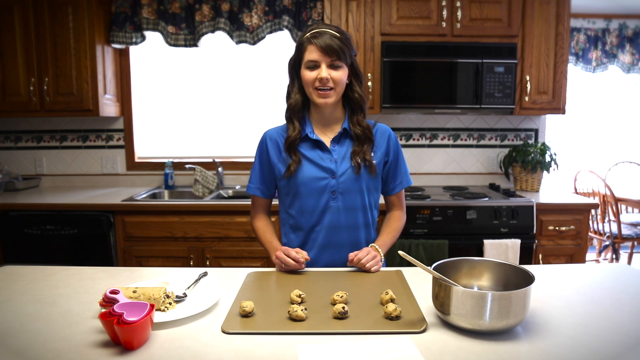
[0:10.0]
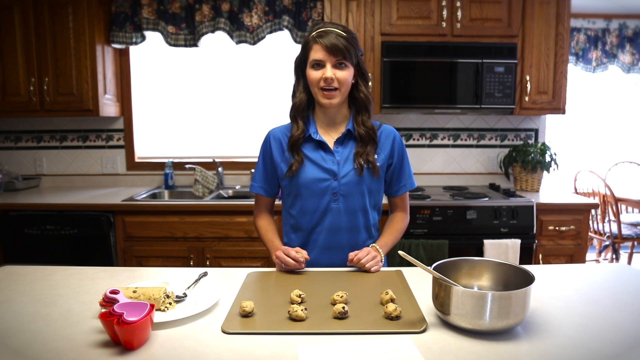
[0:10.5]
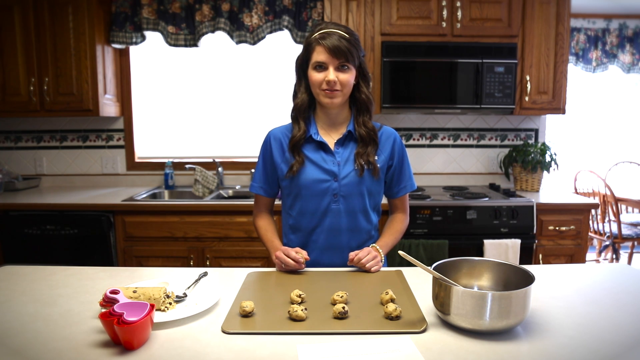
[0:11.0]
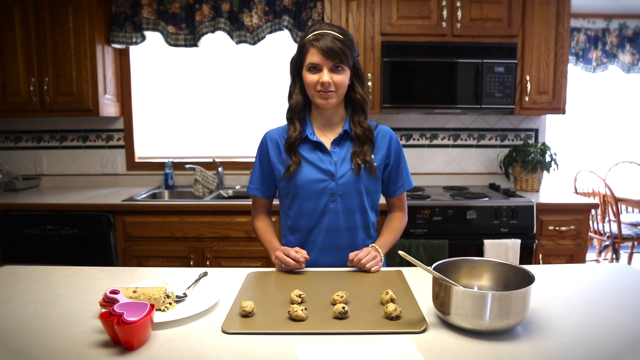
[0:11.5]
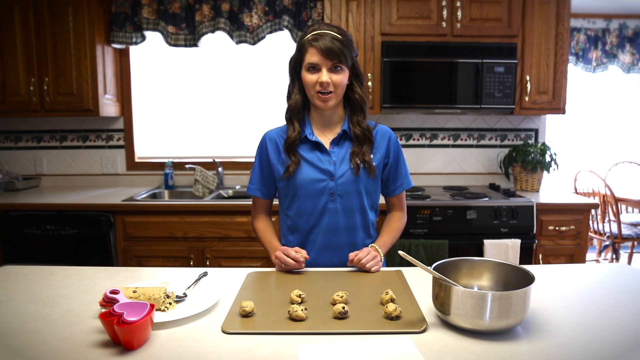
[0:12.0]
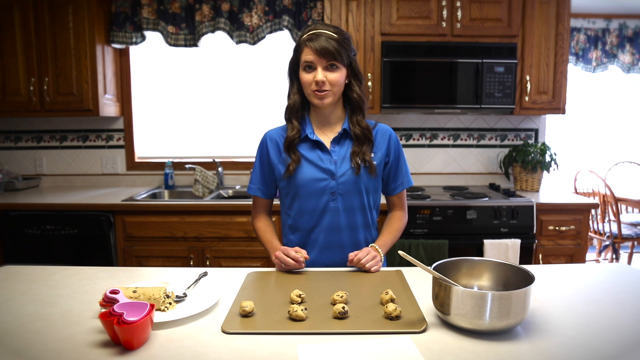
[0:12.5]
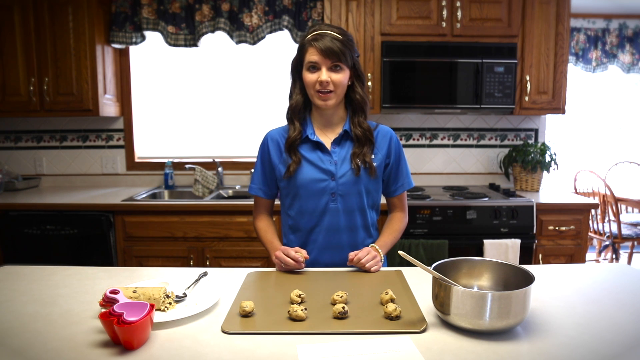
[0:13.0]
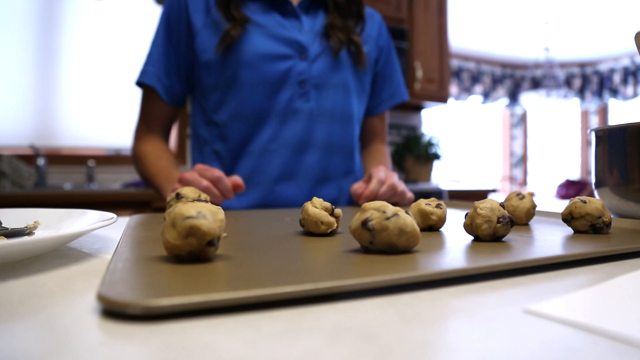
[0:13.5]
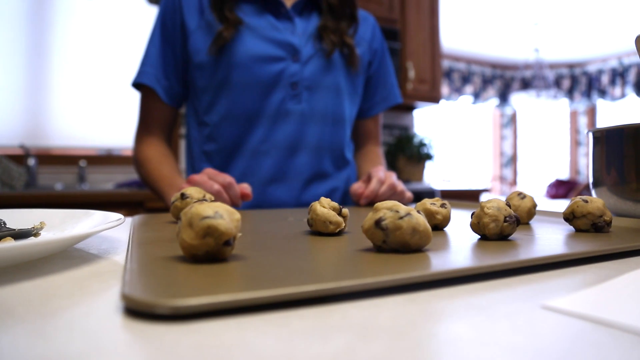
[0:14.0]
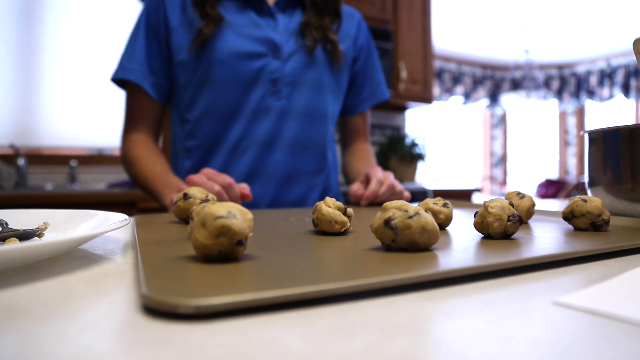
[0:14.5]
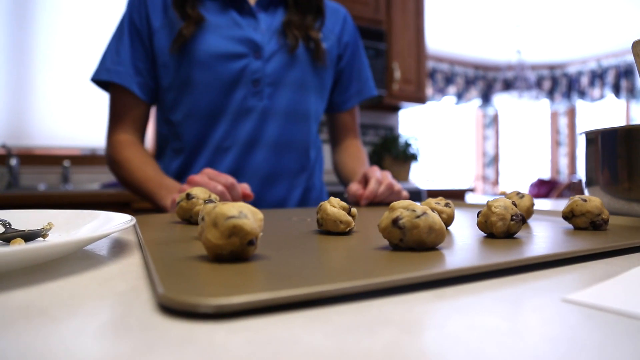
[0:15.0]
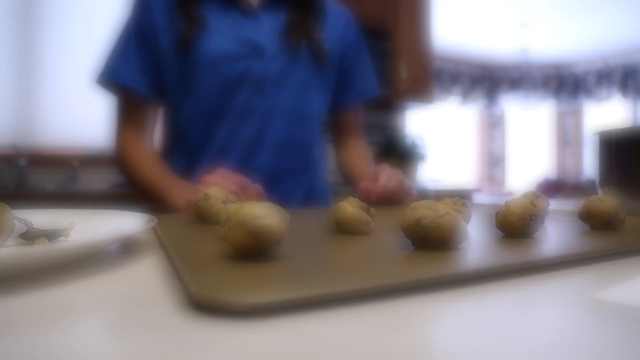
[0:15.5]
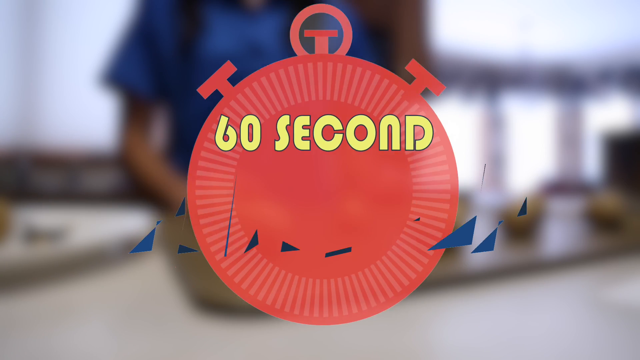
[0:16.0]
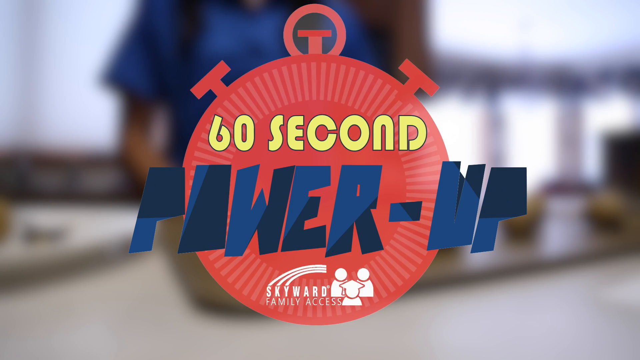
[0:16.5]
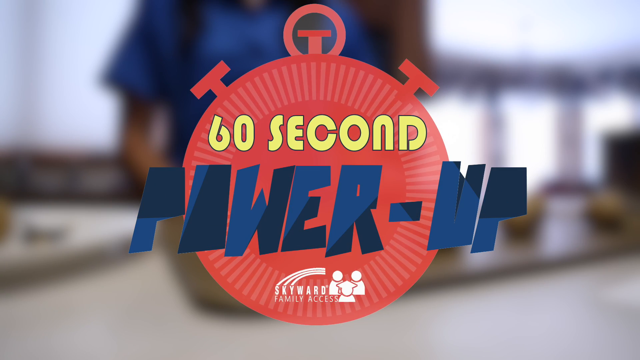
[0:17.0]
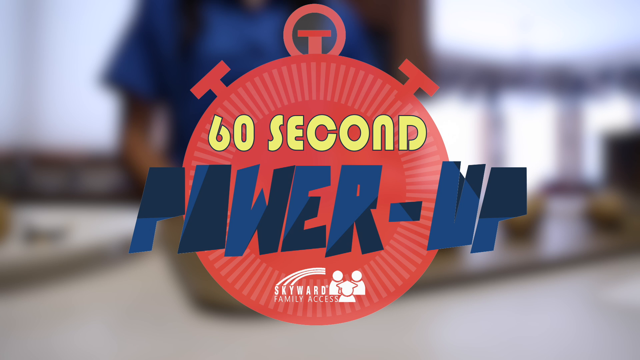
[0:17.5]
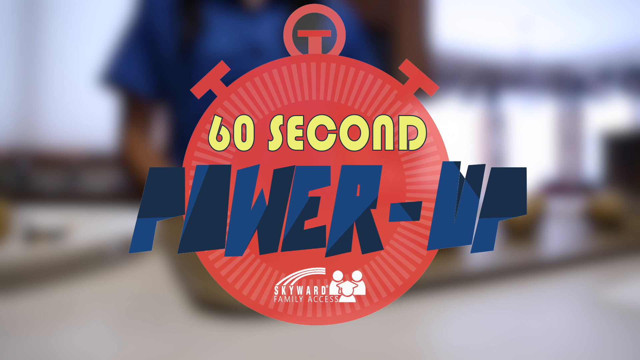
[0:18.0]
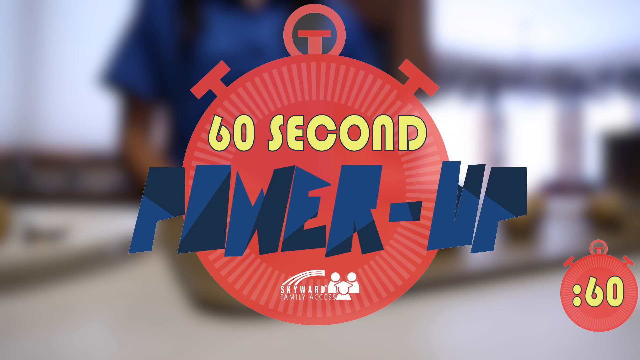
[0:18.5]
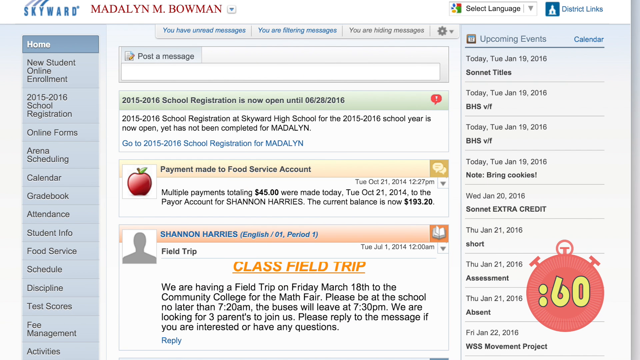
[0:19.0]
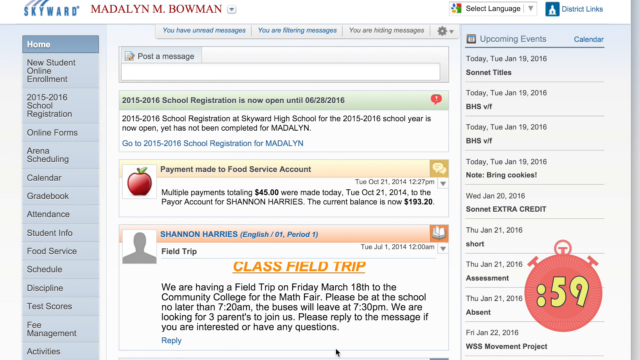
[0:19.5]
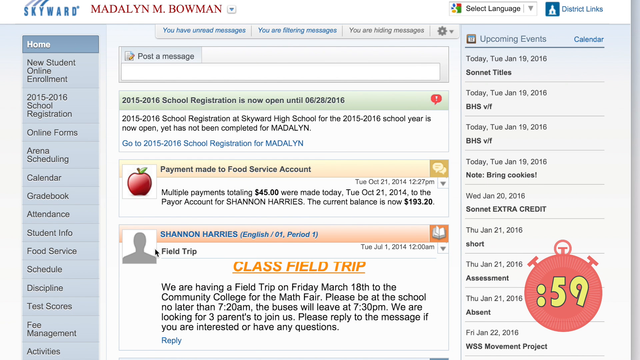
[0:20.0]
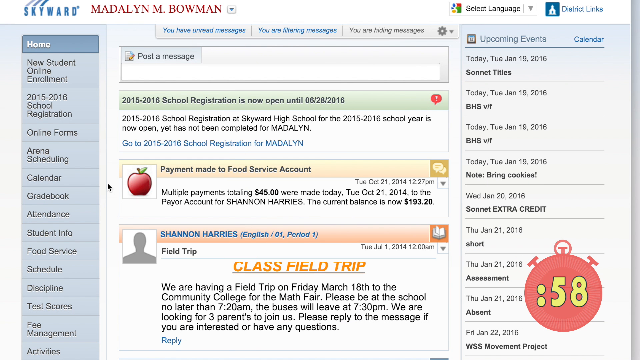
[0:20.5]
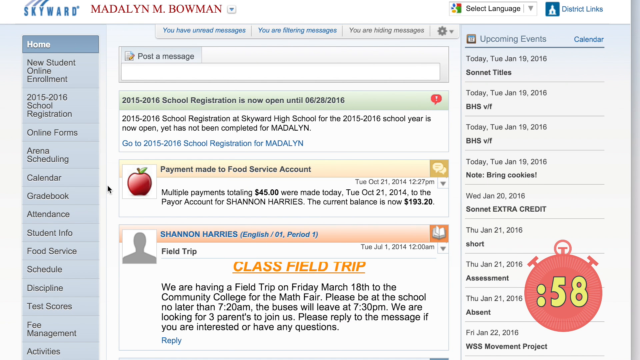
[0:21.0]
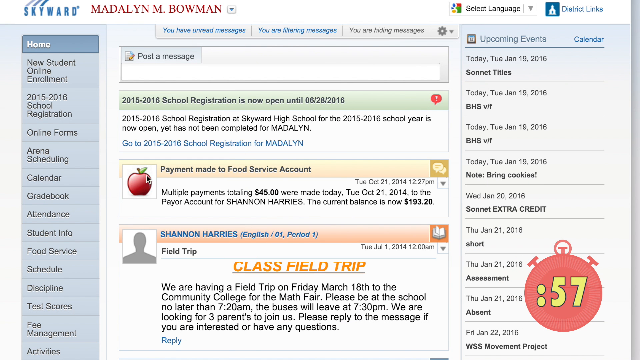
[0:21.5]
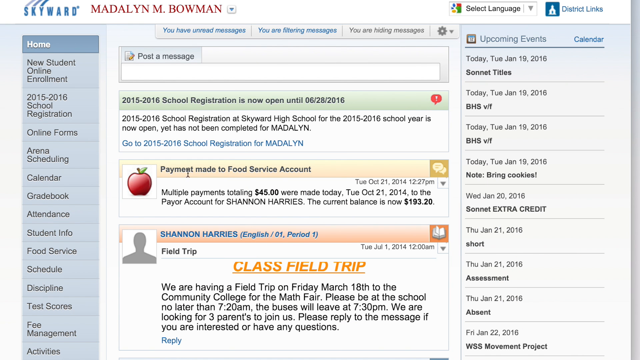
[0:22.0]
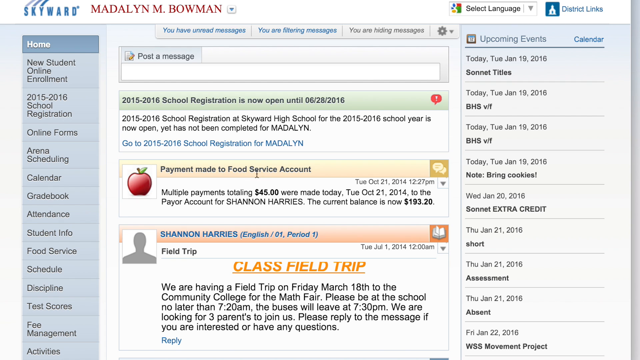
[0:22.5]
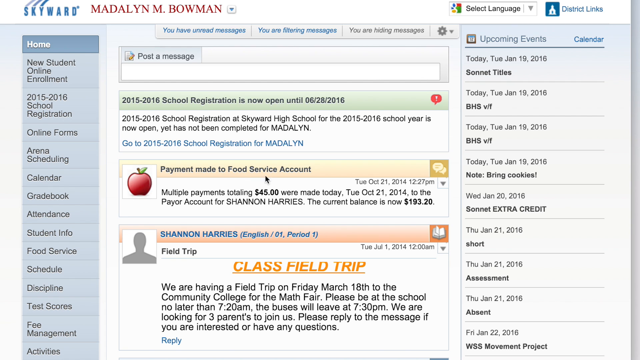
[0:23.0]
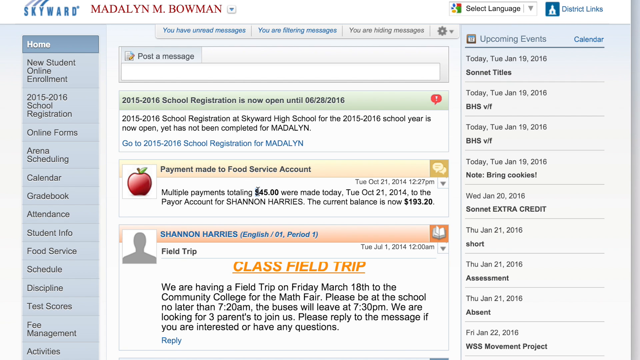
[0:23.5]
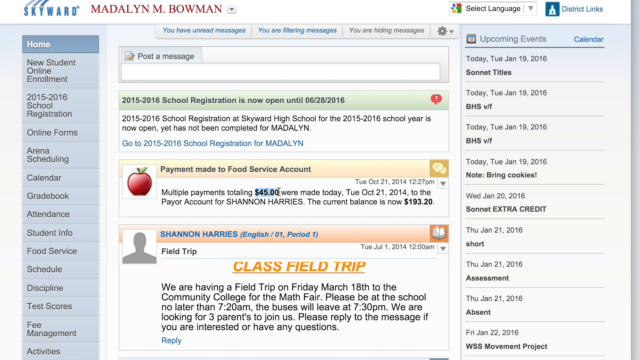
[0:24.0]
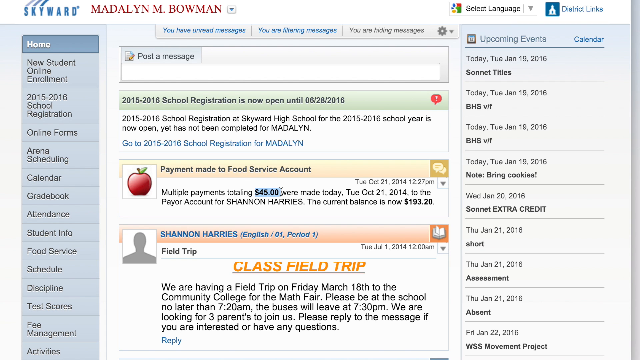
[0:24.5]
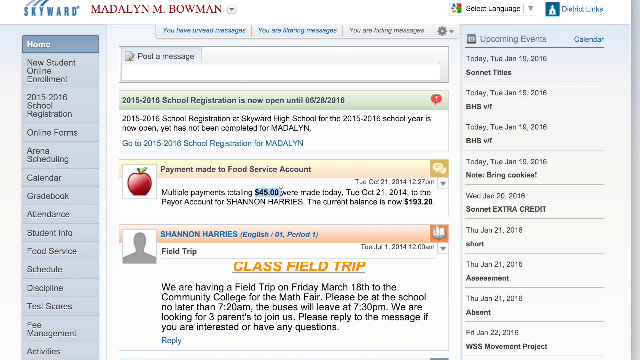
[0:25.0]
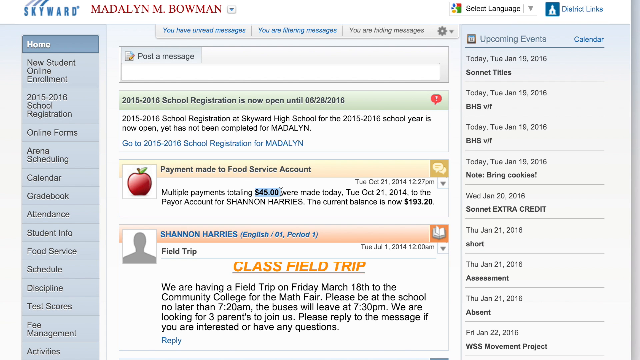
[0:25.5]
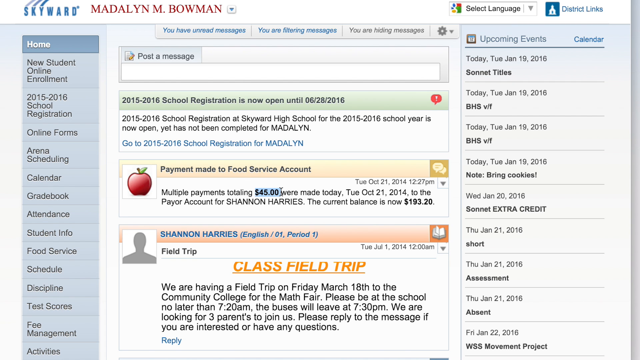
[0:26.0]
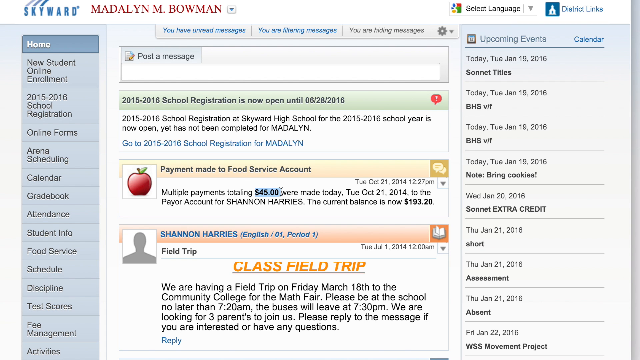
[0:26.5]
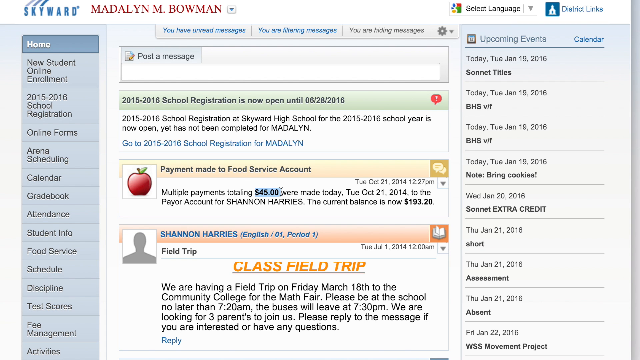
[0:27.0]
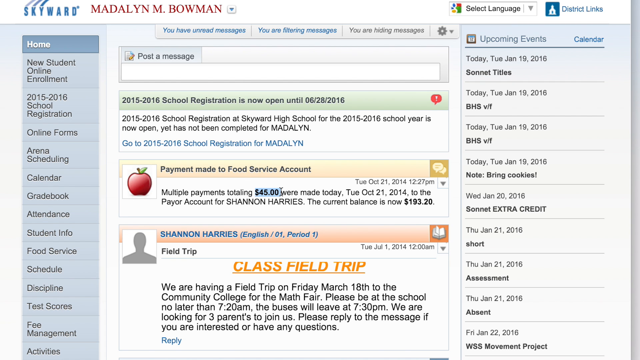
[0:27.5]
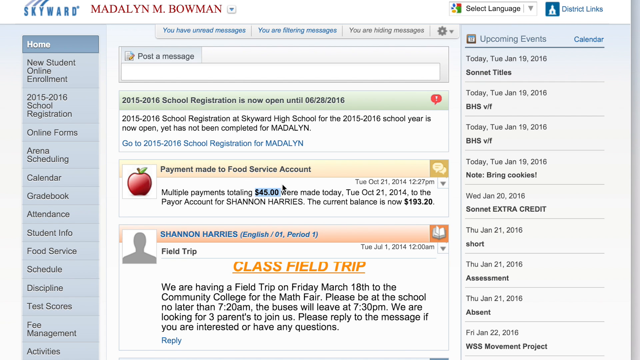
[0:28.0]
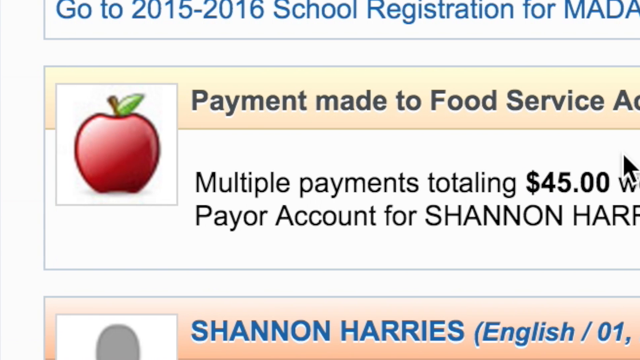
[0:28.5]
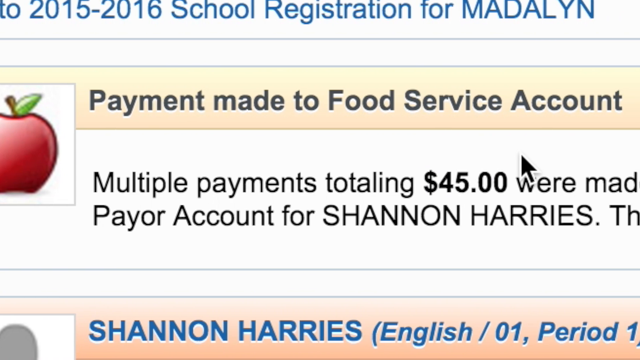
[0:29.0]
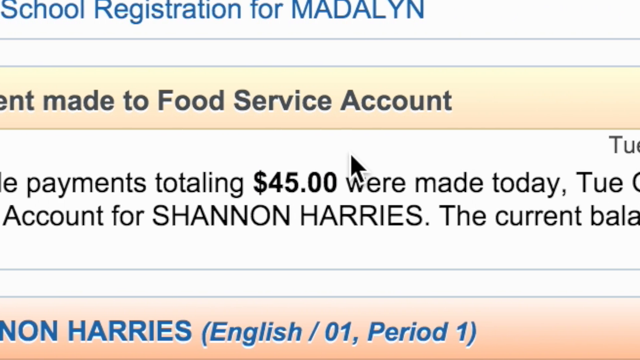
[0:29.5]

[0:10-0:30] In a kitchen with brown cabinets, a sink and a stove are behind a woman who is talking. She stands behind an island-type cabinet, wearing a blue polo shirt and a bracelet, with long brown hair and bangs pulled to the side in a headband; she appears to be white. Next to her is a pan that appears to have something in it, and to her left is a plate with cookie dough. She lays cookies out on a pan while talking. A dining room table is to the right. The video then goes to a graphic reading "60 second power up" with a time clock. A Skyward High School page is shown with a schedule and items such as multiple payments totaling 45, and upcoming events on the right-hand side. The home menu lists new student online enrollment, registration, online forms, and class field trip below. In the corner, a countdown clock runs at 58 seconds. The page is for Madeline M Bowman, and the video goes through various aspects of it.